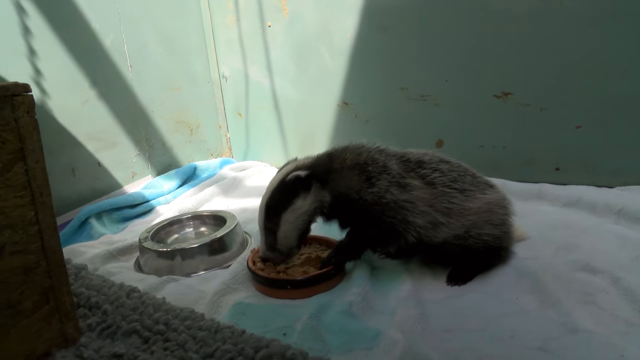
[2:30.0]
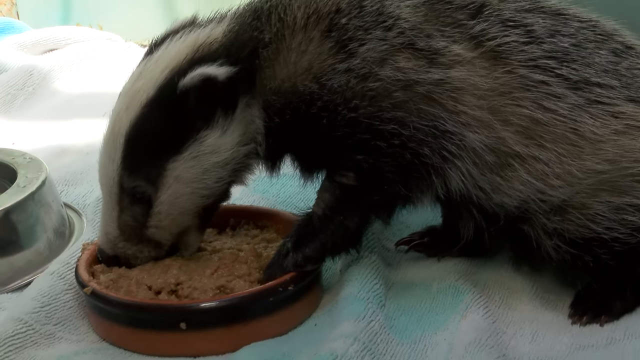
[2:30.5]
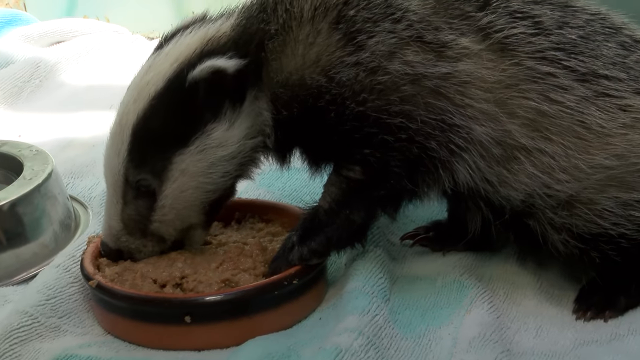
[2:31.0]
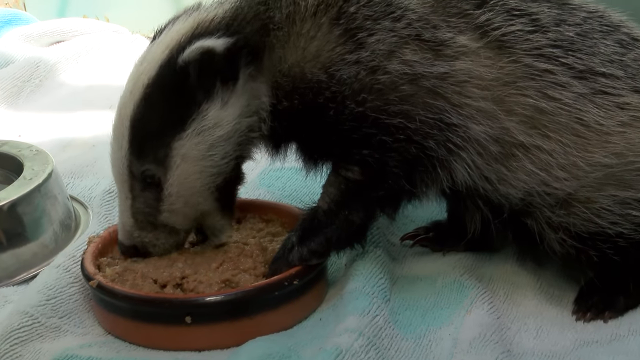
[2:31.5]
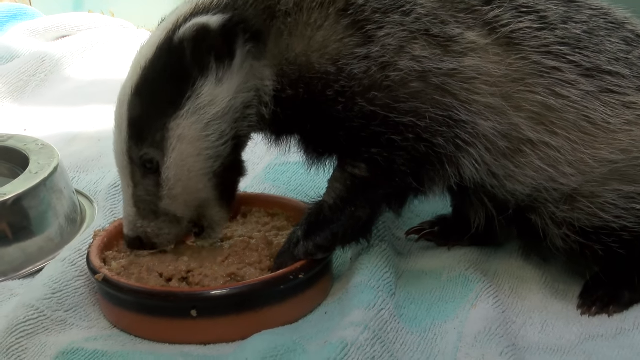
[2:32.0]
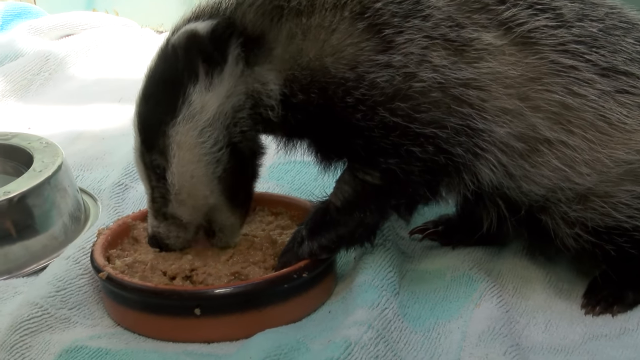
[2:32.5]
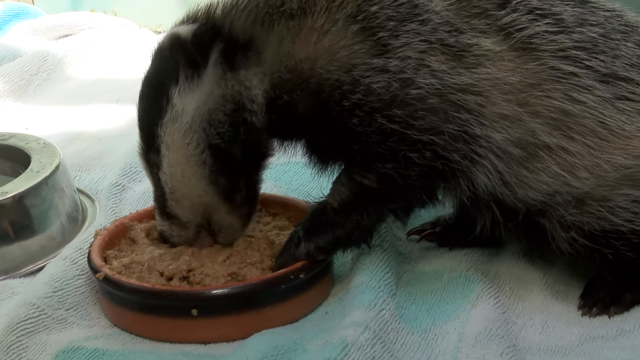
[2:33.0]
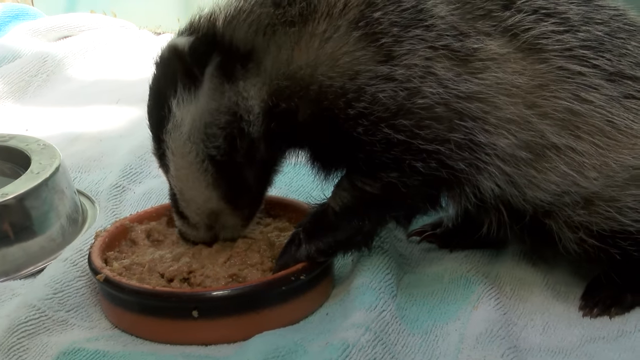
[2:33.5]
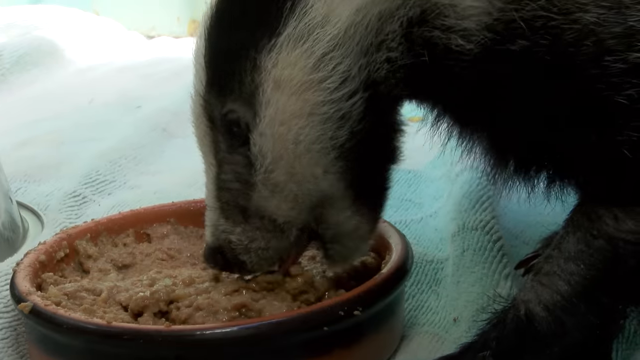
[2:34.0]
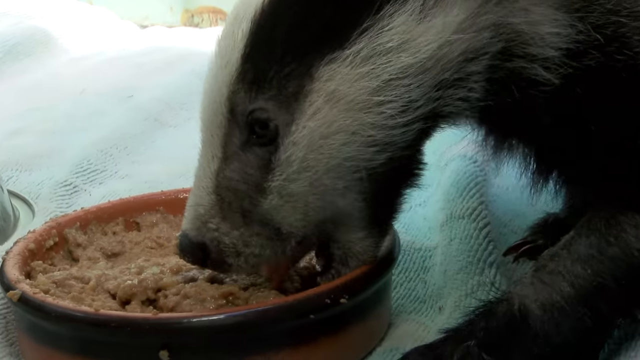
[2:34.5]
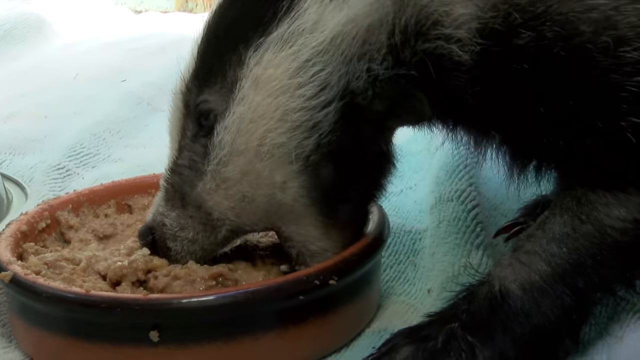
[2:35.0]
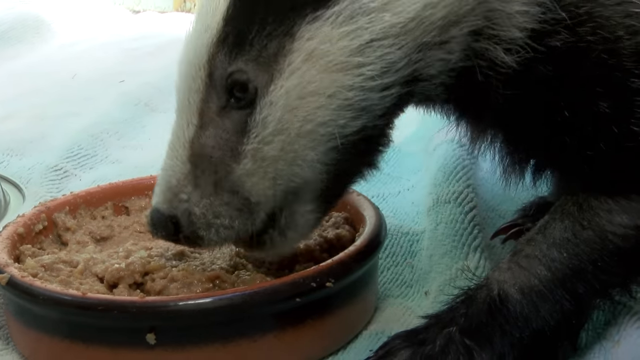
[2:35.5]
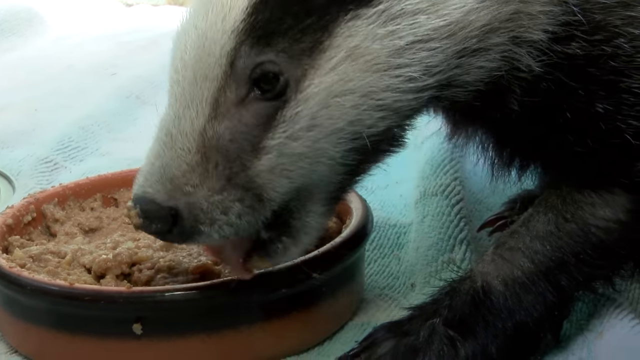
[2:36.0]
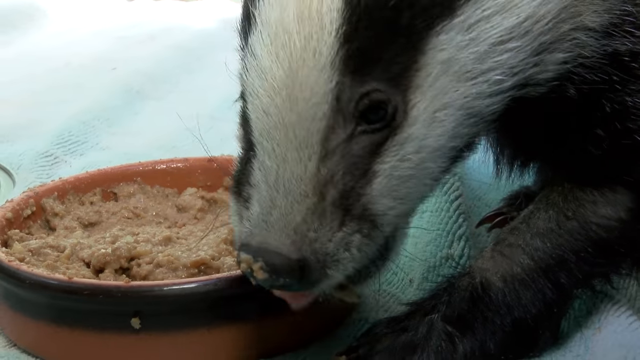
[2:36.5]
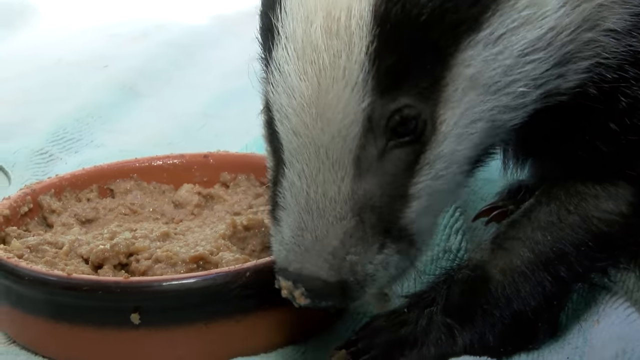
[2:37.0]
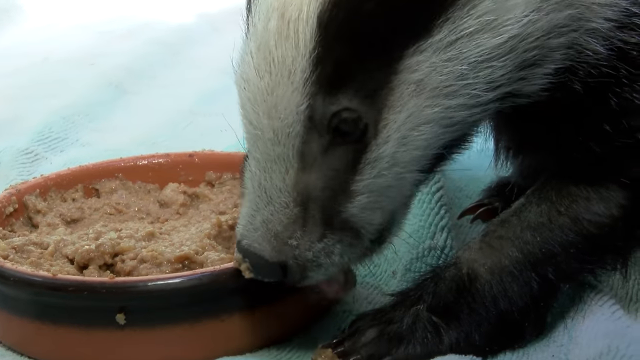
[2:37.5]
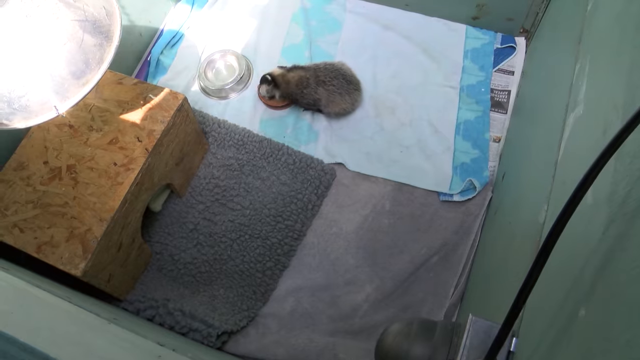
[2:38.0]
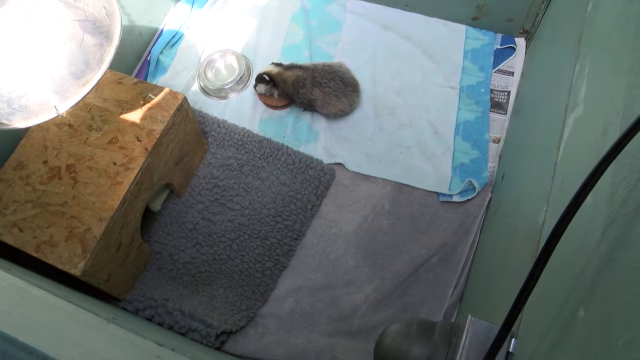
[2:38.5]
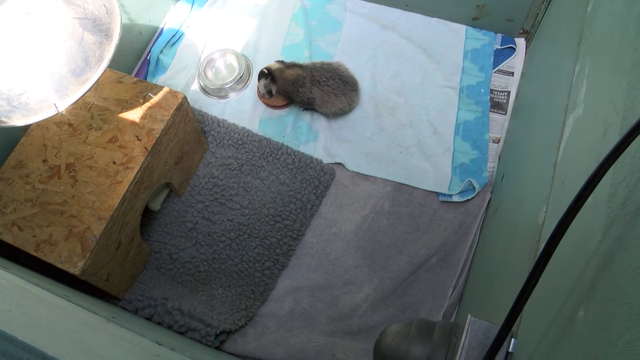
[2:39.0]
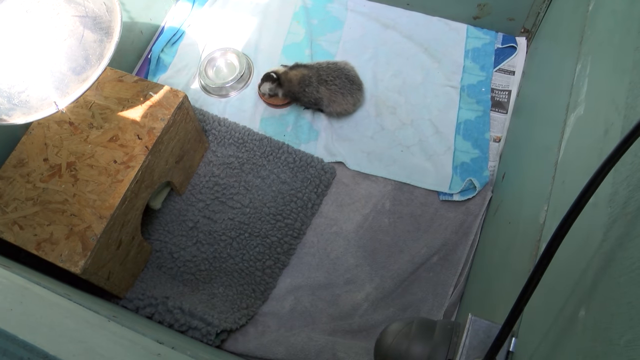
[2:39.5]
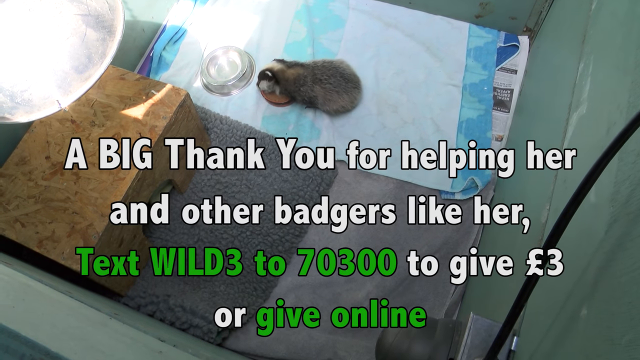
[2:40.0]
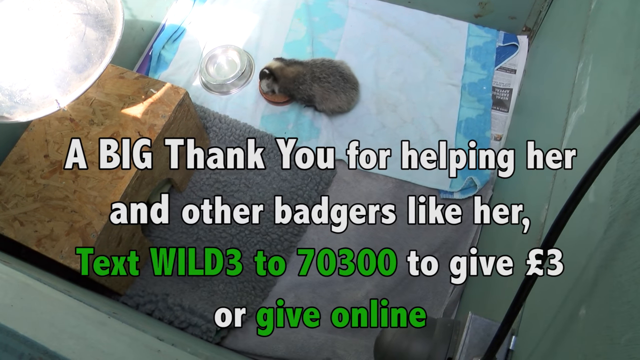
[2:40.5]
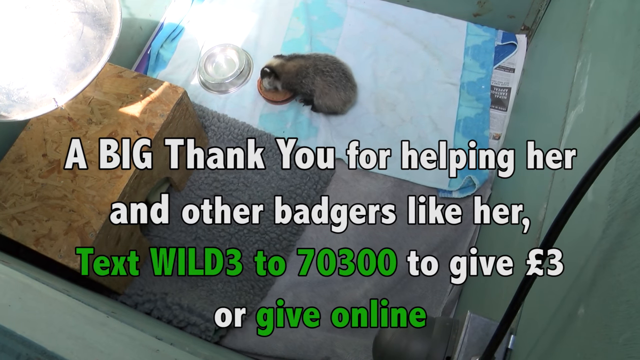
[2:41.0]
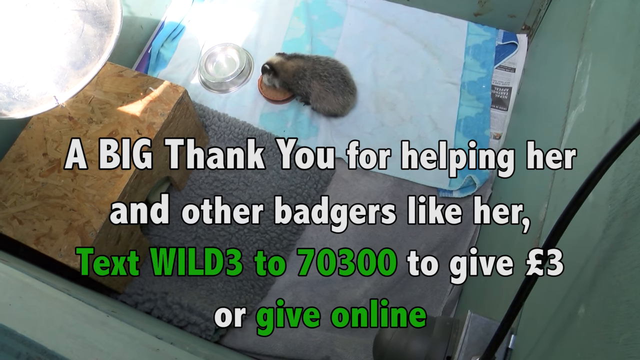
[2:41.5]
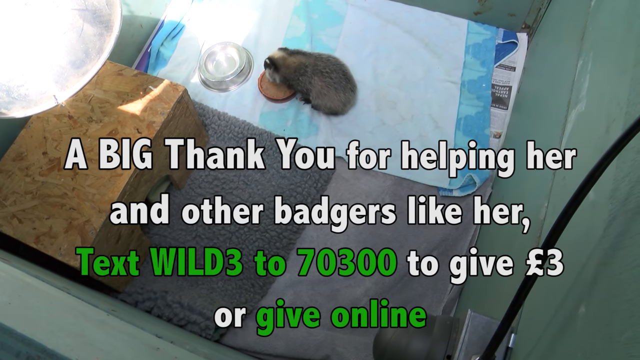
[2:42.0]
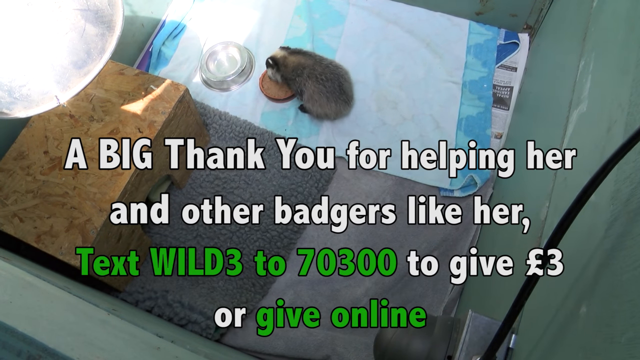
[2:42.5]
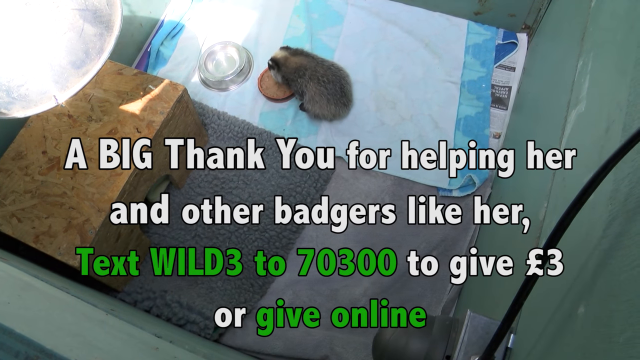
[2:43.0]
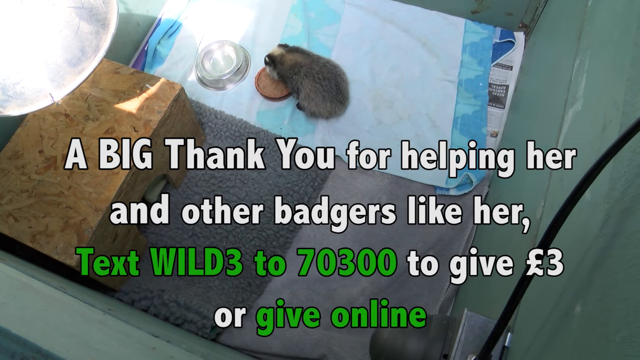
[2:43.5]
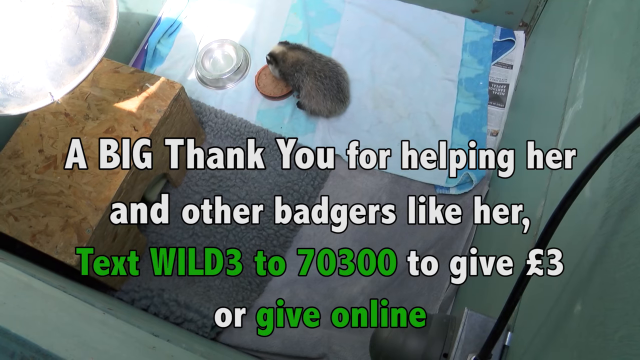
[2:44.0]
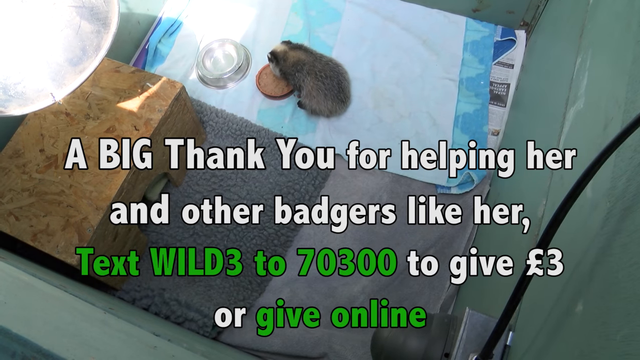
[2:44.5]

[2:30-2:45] The badger is on a towel in its own space, eating a meal out of a bowl, with a silver bowl next to it that may have water in it. It eats very quickly and eats a lot, licking its lips, with a lot of food on its whiskers and fur. The camera then pans from the top, showing more of the enclosure: the towel, paper under the towel, and a box with a hole in it, possibly where he sleeps. He is still eating, and there is a silver bowl with water in it. The walls are green. Words appear on the screen: "a big thank you for helping her and other badgers like her. Text WILD3 to 70300 to give £3 or give online."